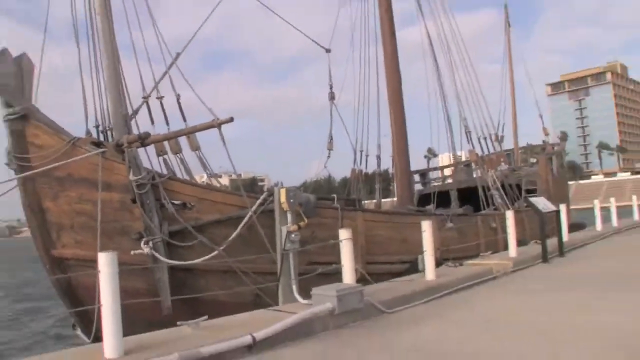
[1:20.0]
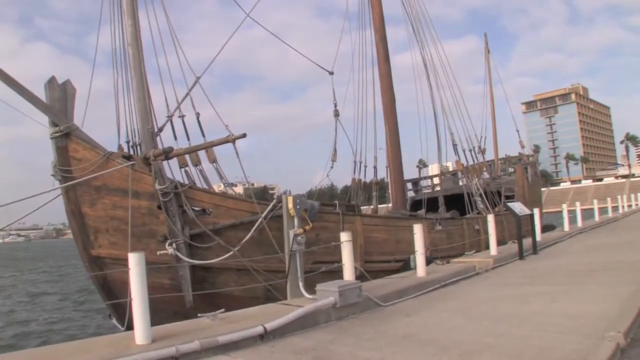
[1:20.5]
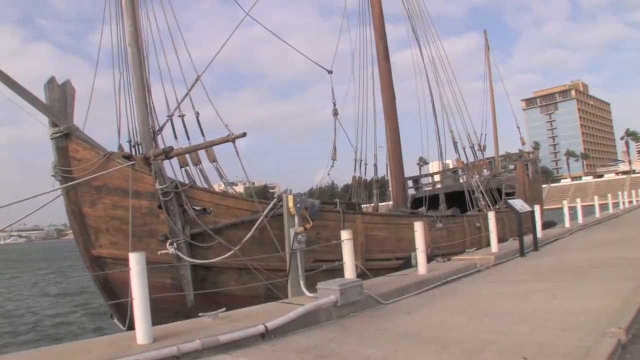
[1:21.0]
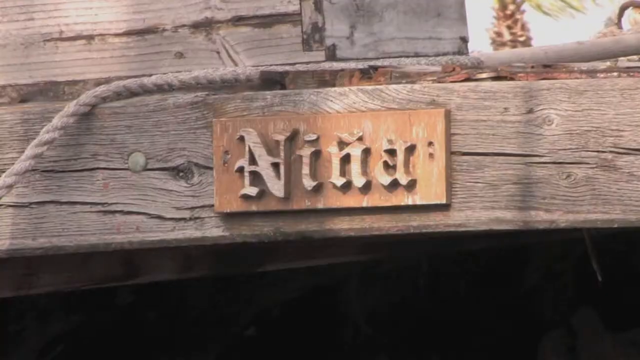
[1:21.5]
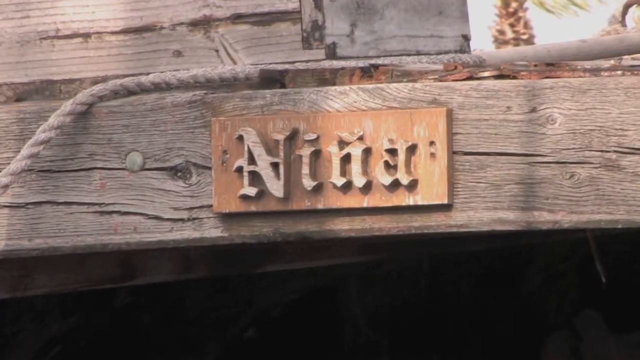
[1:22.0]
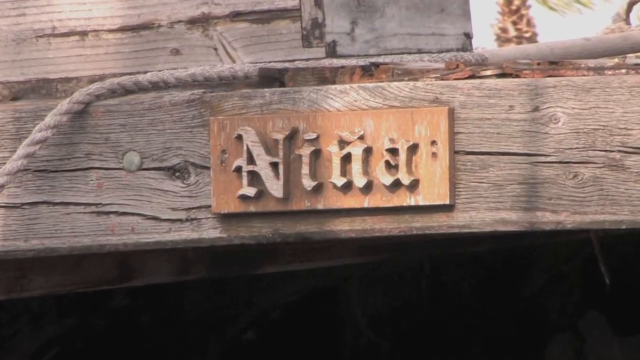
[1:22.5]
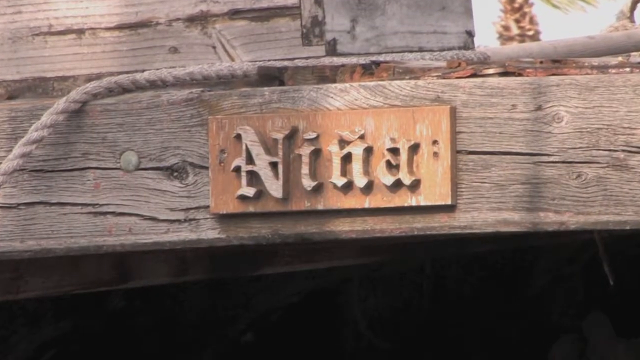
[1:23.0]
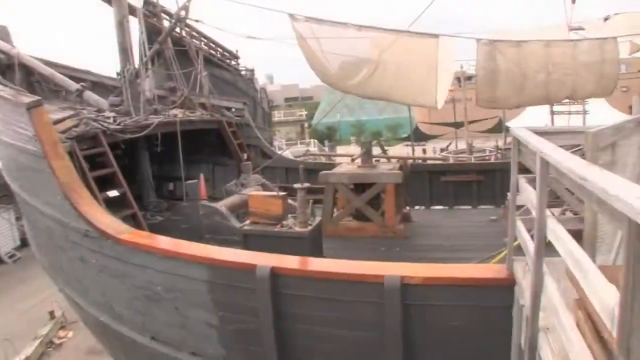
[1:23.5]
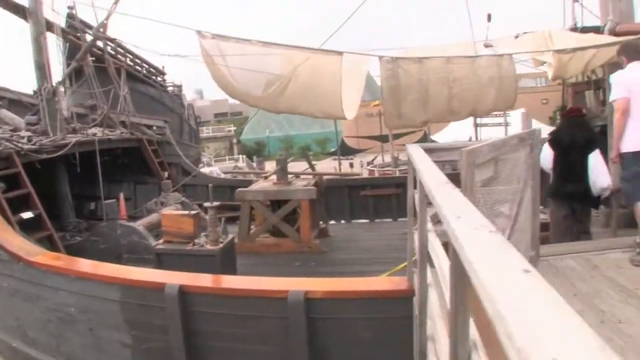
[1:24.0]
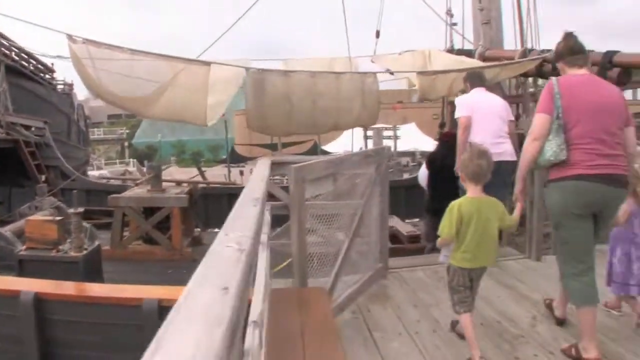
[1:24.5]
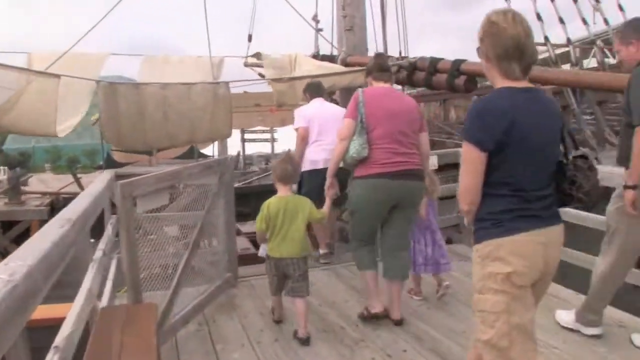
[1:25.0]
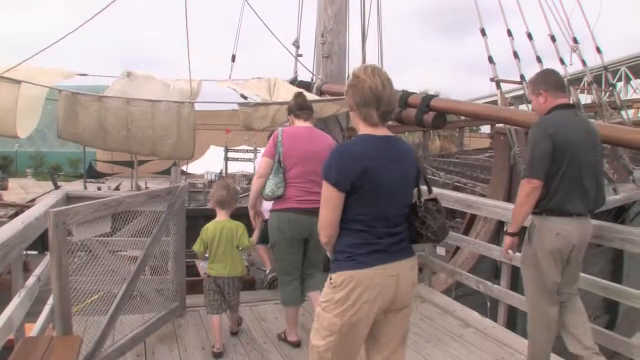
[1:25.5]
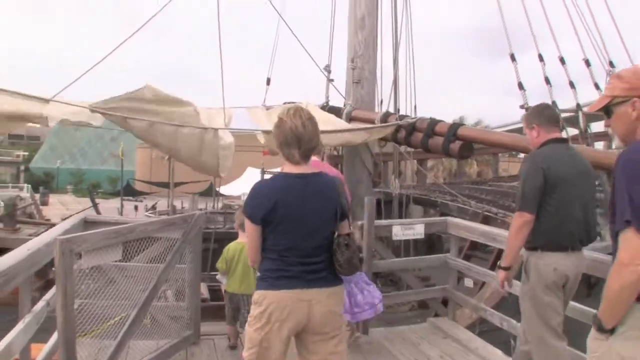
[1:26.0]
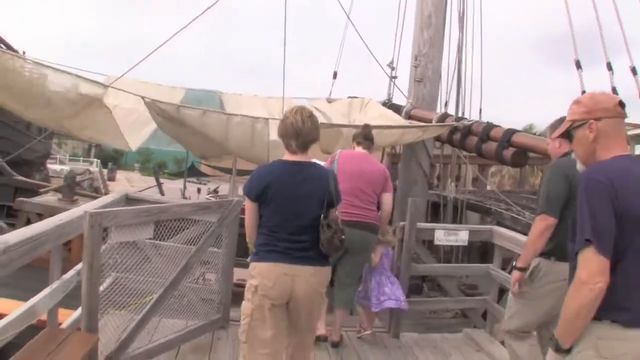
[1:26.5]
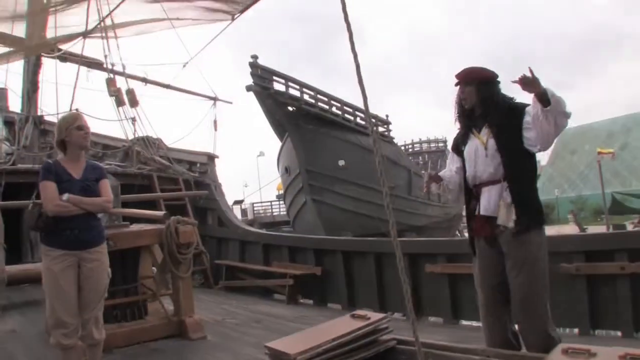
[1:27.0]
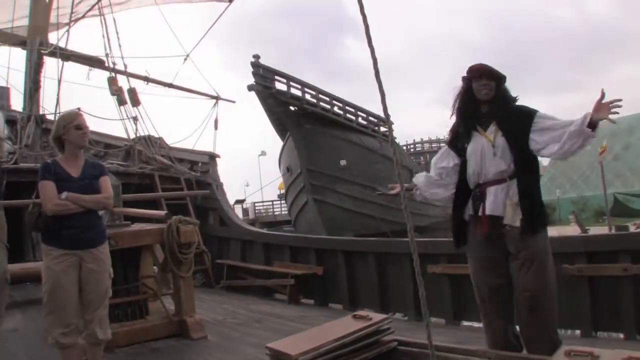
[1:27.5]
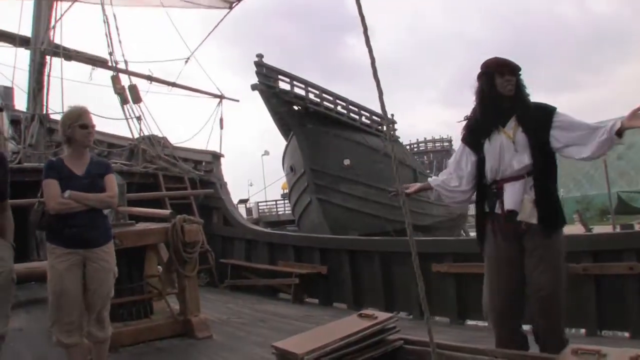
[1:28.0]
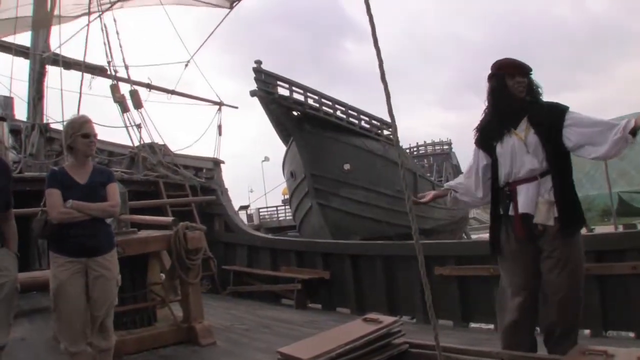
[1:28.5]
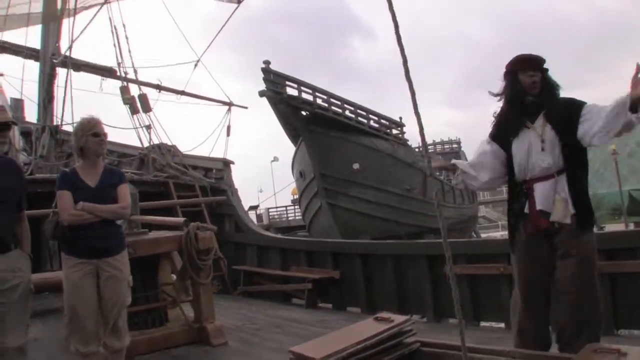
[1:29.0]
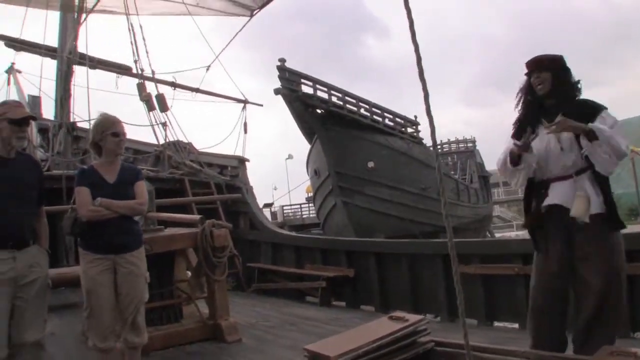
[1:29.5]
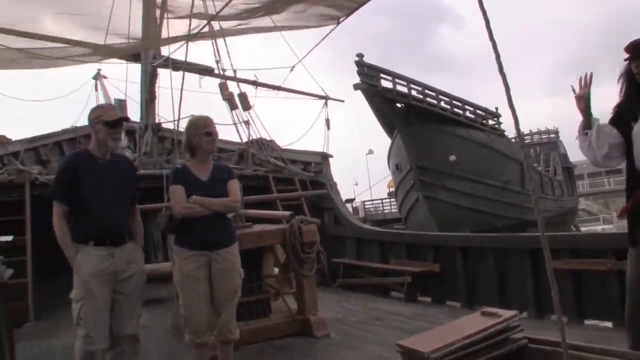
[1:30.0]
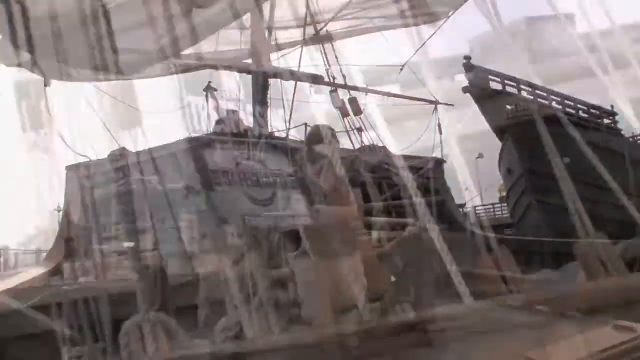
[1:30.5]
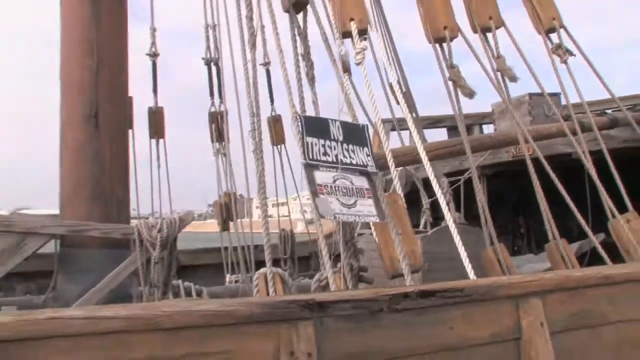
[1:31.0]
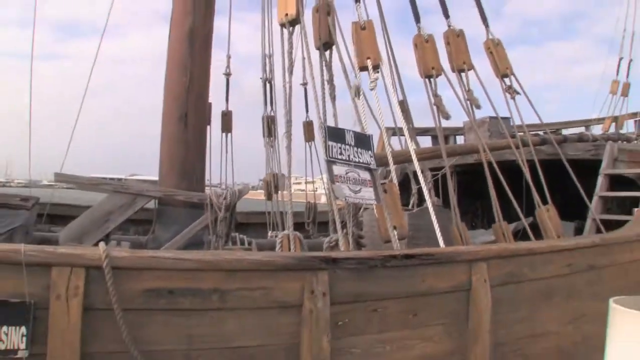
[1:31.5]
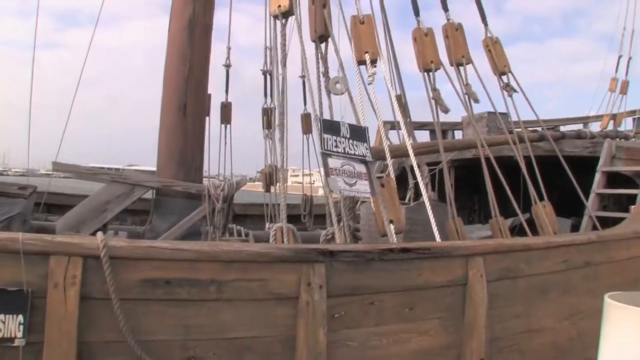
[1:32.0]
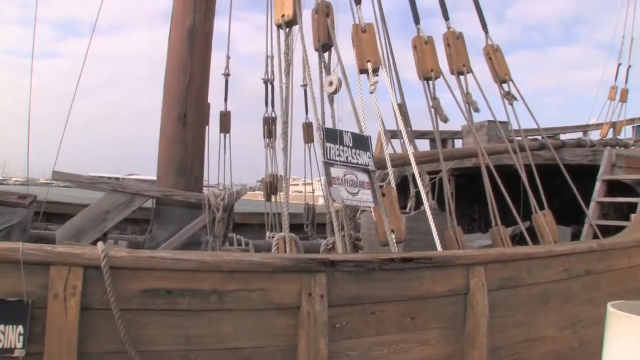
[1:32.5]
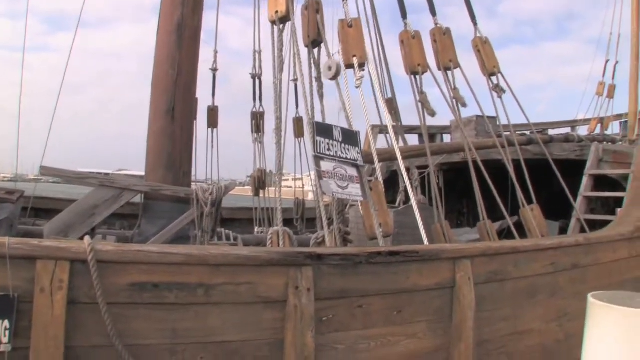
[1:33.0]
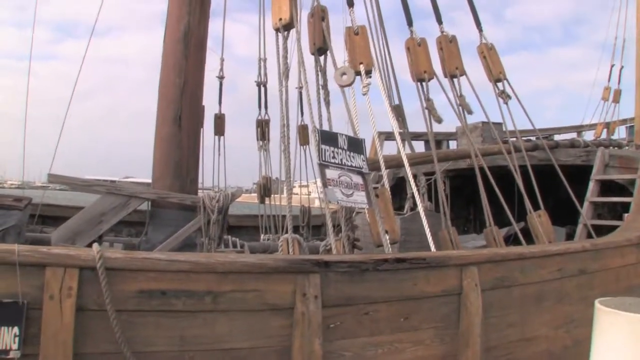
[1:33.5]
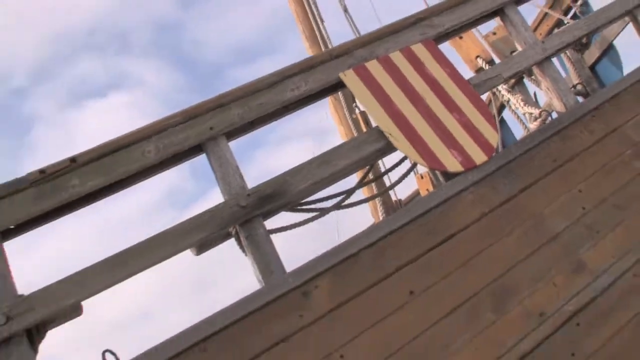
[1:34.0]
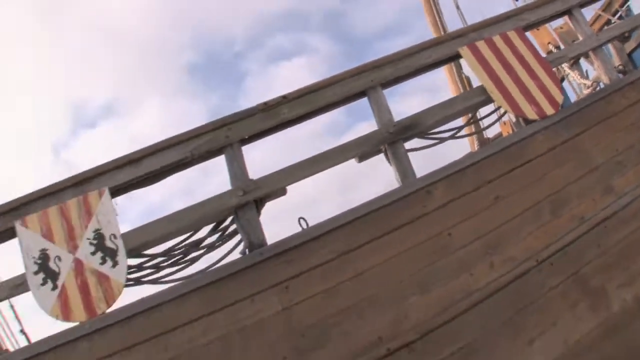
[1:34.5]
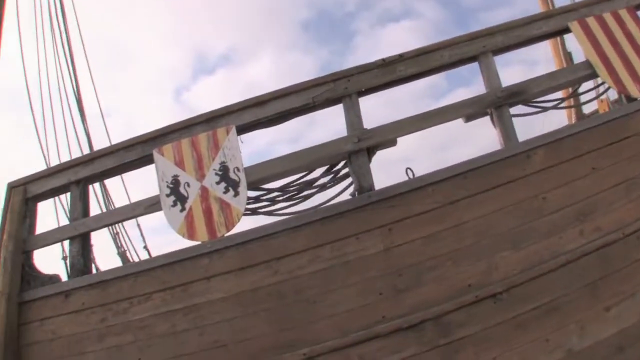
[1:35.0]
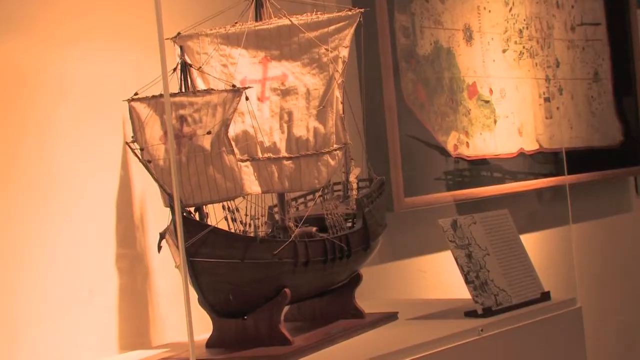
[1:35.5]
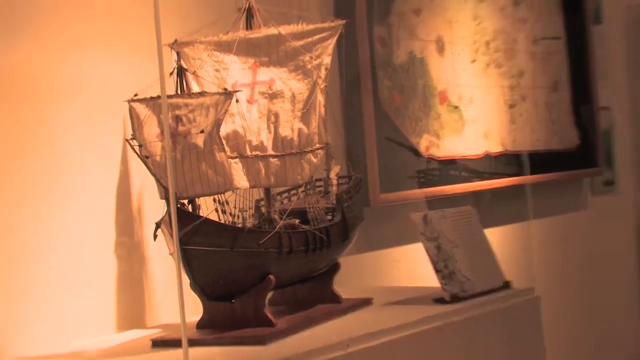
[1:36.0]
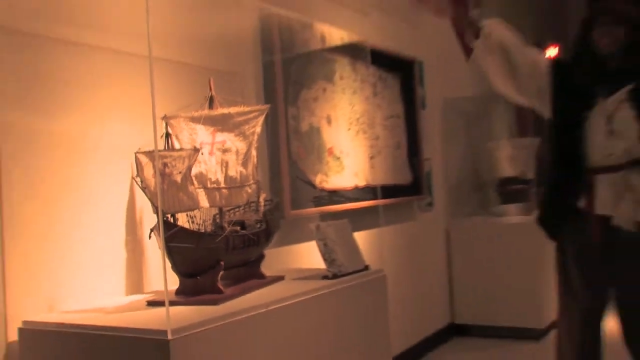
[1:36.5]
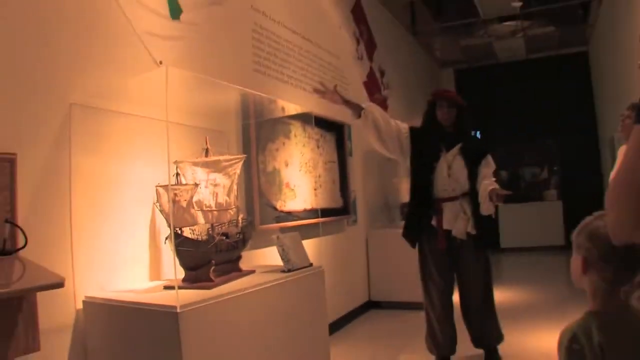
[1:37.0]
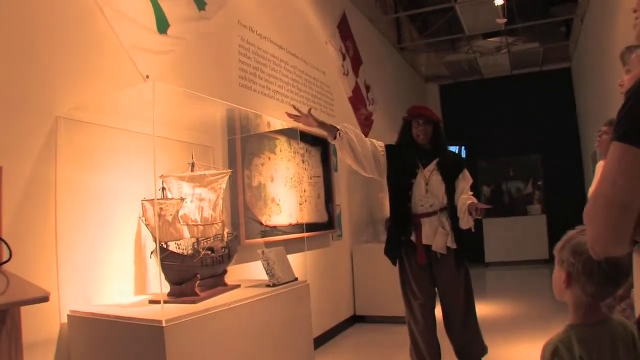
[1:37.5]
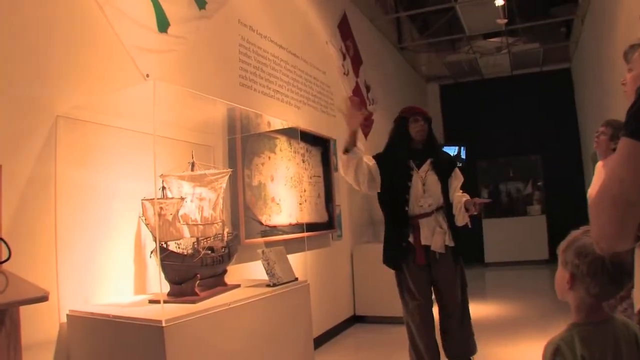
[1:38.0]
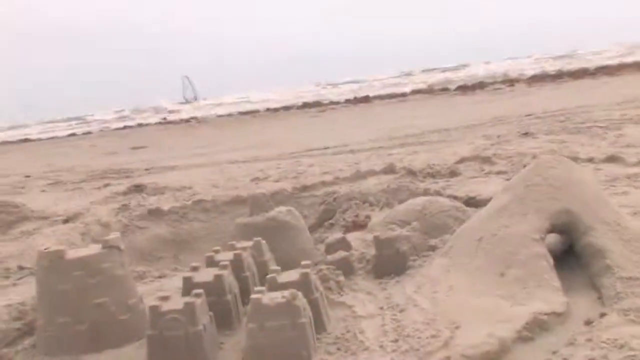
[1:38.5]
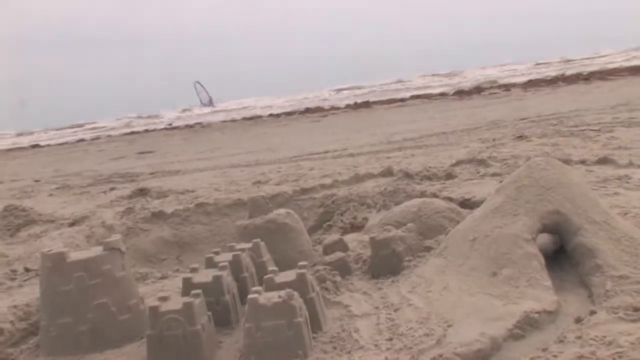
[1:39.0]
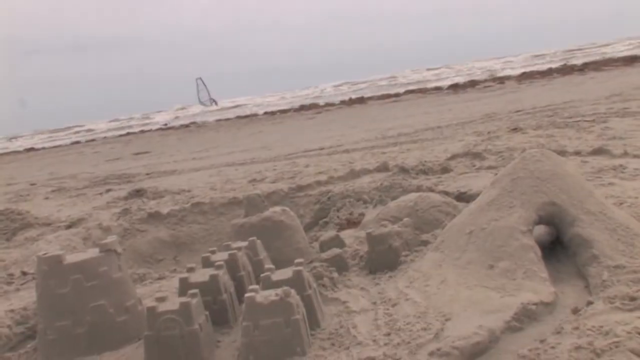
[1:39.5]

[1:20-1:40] An old sailboat is parked in the ocean. It is completely brown and unpainted, with its masts up but no sails. The camera zooms out, showing the water behind it, and then zooms in on a plaque, apparently on the boat, that reads "NINA". People walk from the right of the screen and the bottom middle of the screen to board the boat. A chubbier woman in a pink shirt has a purse on her left arm; her left arm comes down and she holds the right hand of a child in a green shirt. Next, someone dressed like Captain Jack Sparrow stands on the right side of the screen giving a speech. He holds both arms out with his palms up, then brings his arms in, holds his right hand up, and sort of extends his fingers as if showing the number five. The ropes on the boat are shown, and then a small boat inside a museum. The scene moves to a beach with a sandcastle in the foreground at the bottom of the screen; in the background a person is on something like a surfboard with a sail on it.